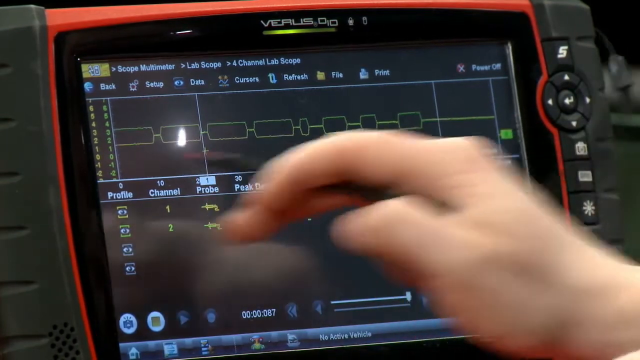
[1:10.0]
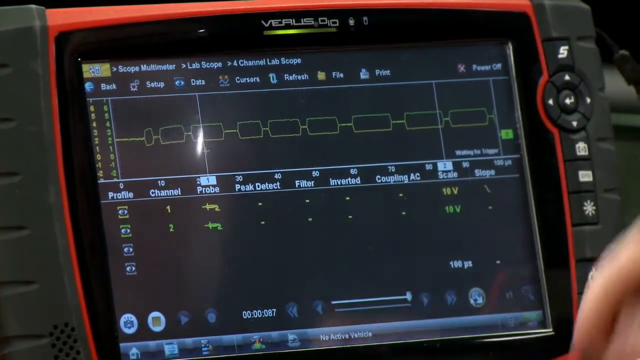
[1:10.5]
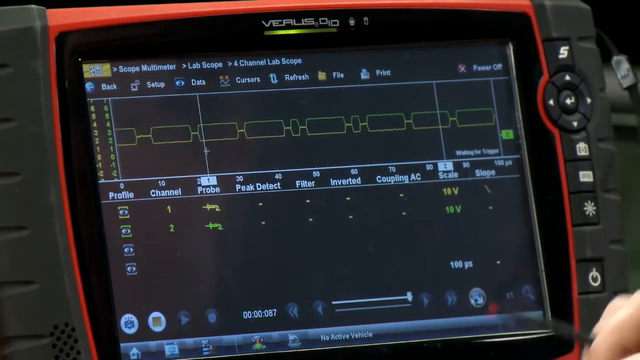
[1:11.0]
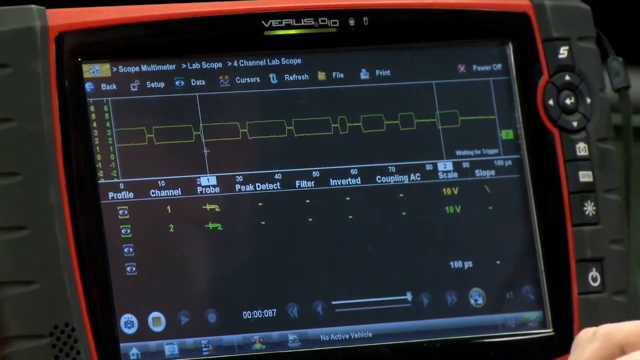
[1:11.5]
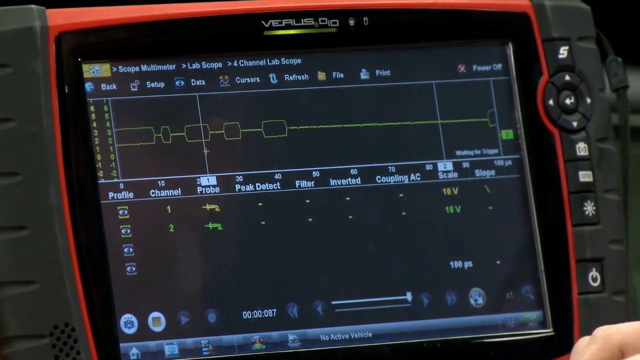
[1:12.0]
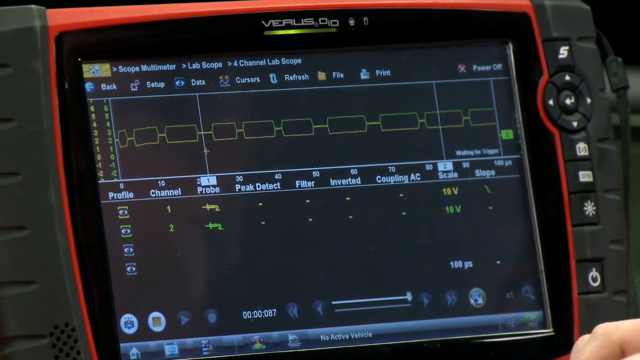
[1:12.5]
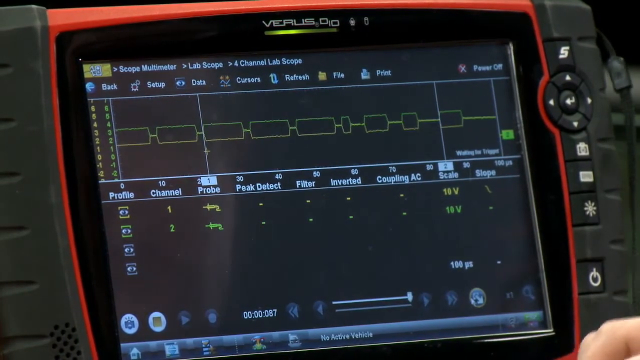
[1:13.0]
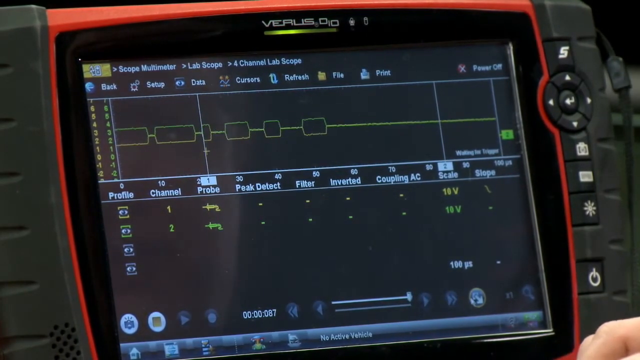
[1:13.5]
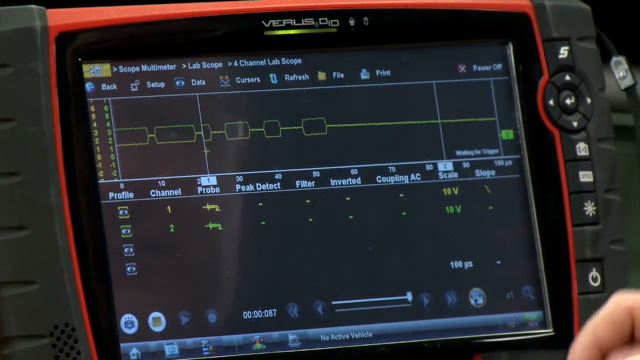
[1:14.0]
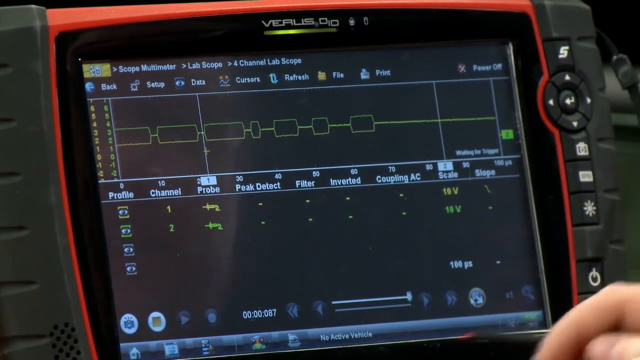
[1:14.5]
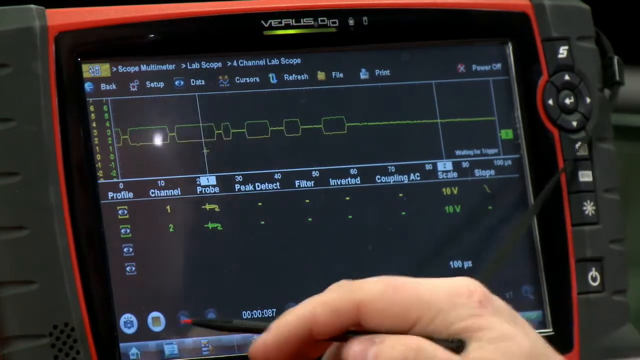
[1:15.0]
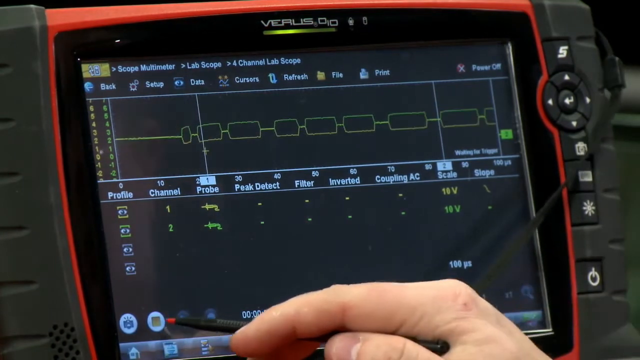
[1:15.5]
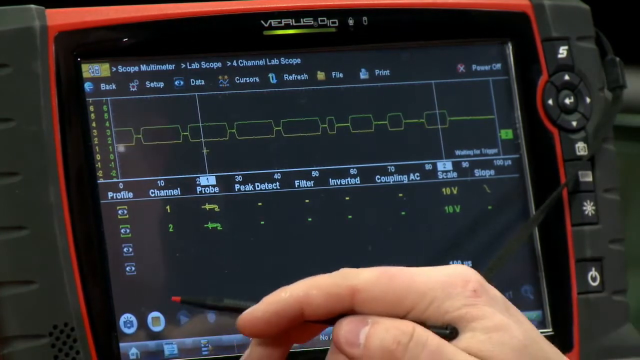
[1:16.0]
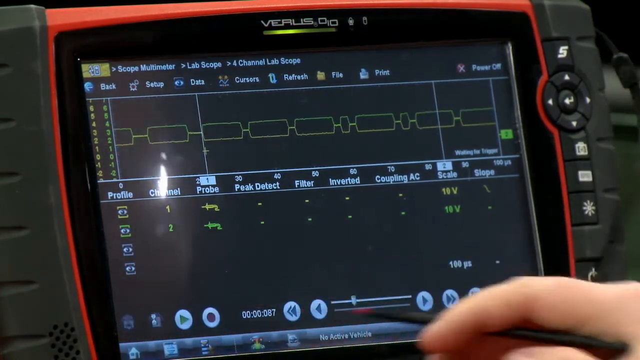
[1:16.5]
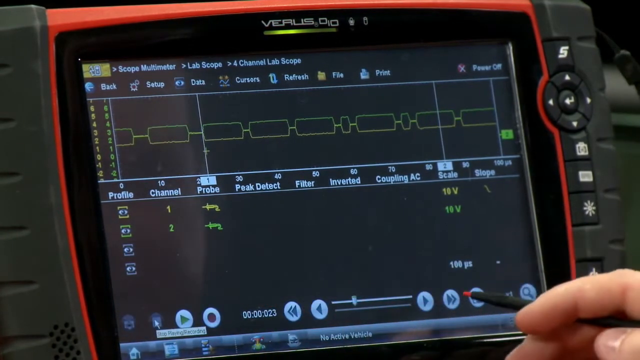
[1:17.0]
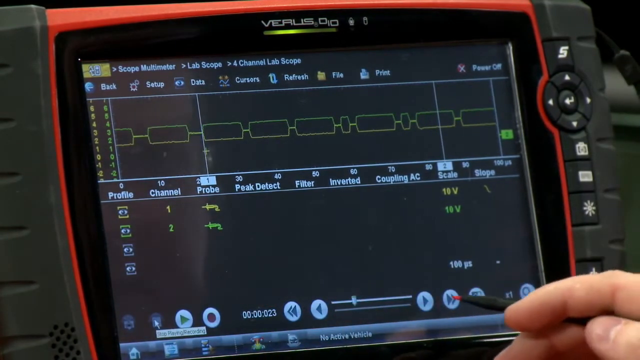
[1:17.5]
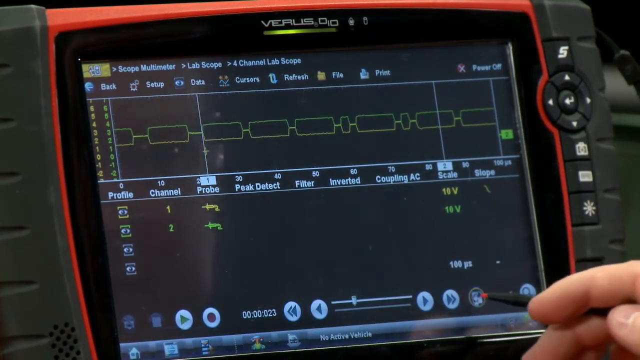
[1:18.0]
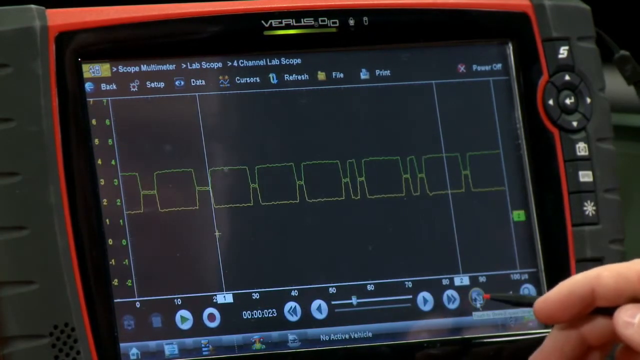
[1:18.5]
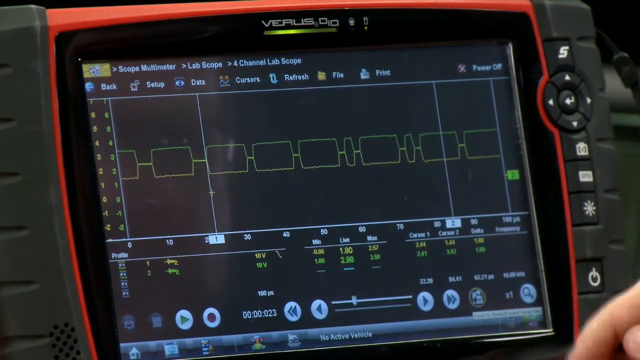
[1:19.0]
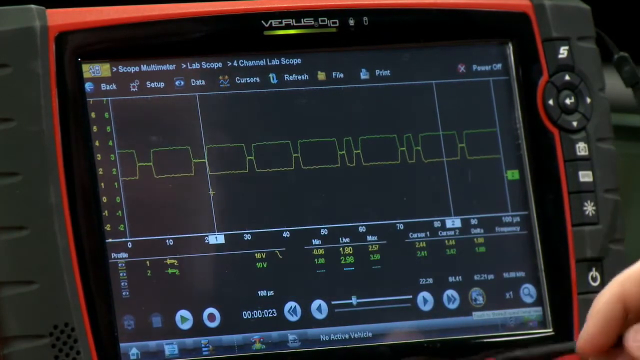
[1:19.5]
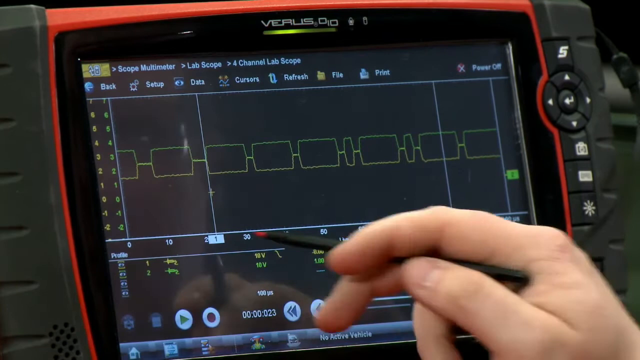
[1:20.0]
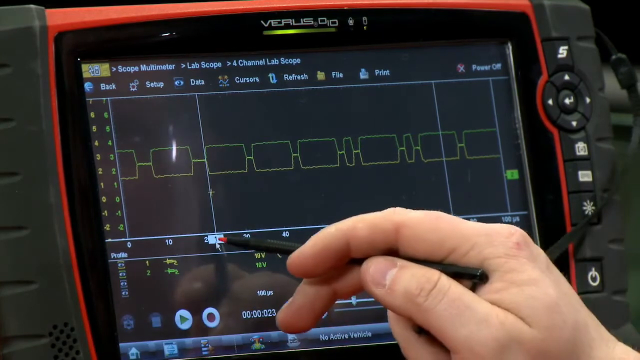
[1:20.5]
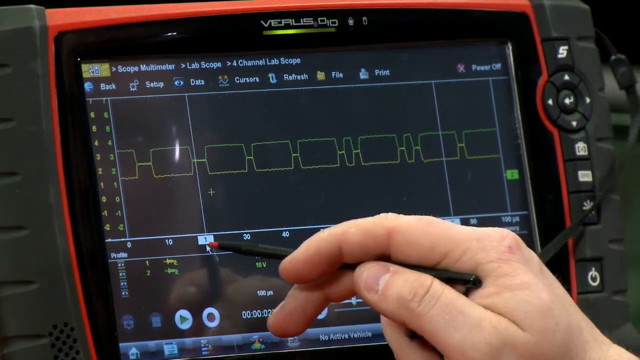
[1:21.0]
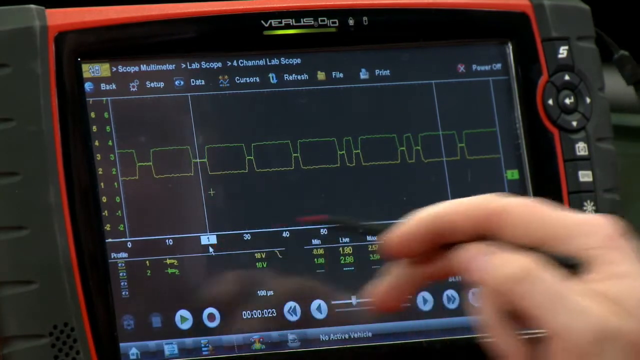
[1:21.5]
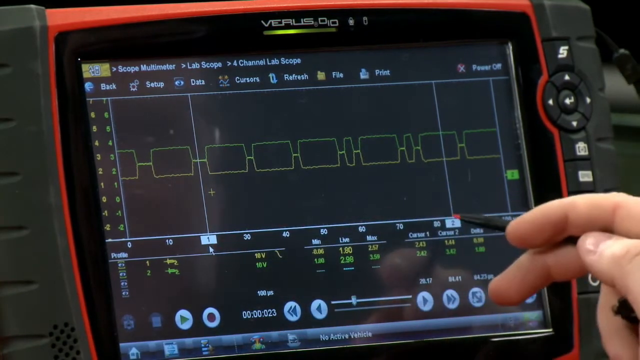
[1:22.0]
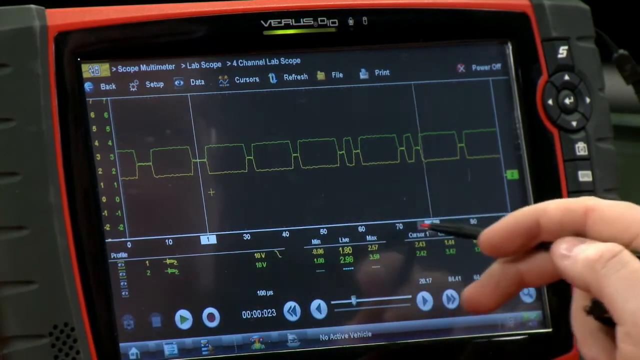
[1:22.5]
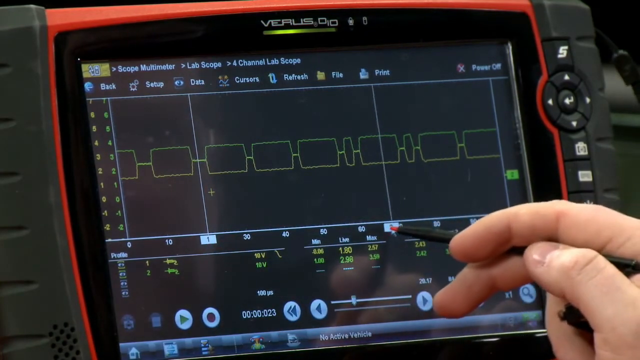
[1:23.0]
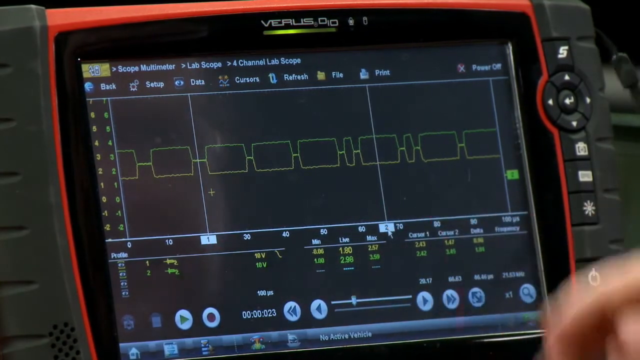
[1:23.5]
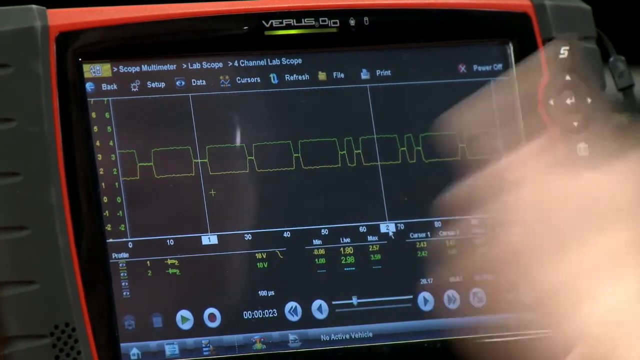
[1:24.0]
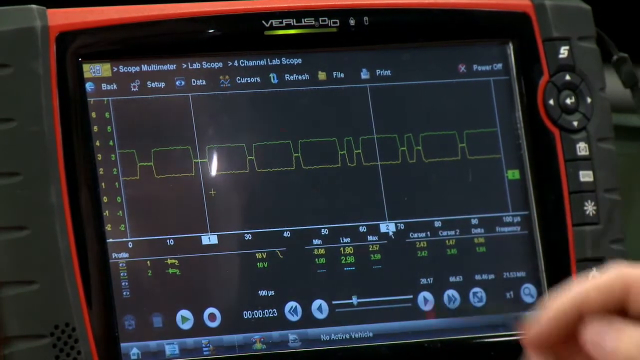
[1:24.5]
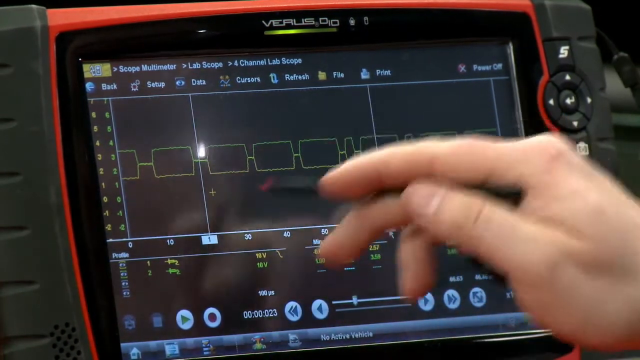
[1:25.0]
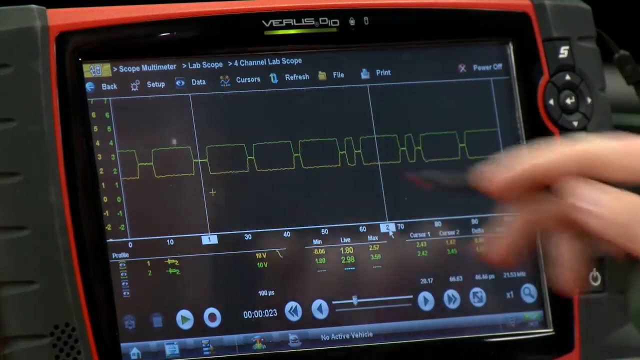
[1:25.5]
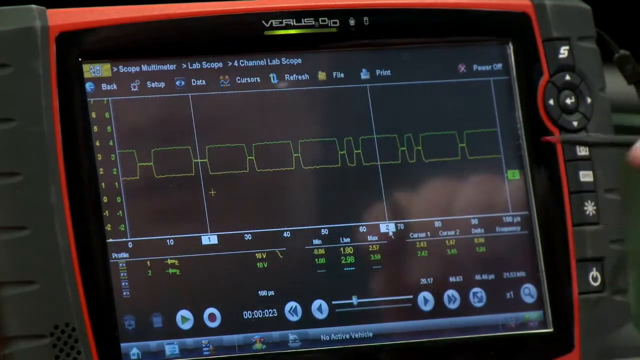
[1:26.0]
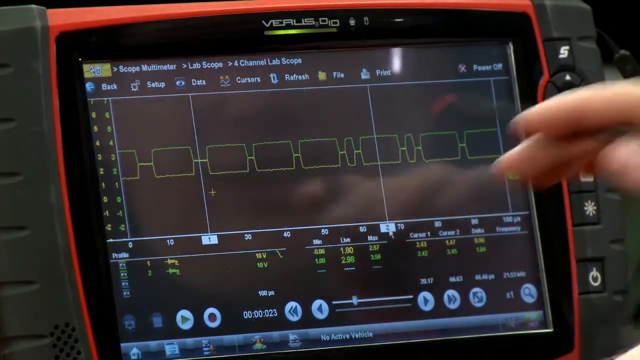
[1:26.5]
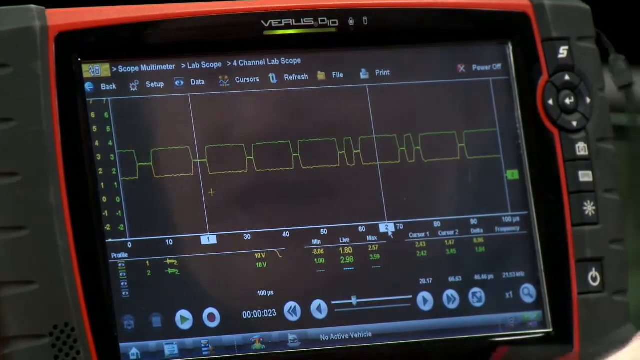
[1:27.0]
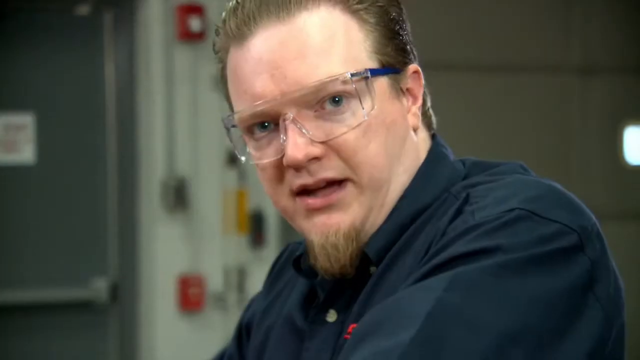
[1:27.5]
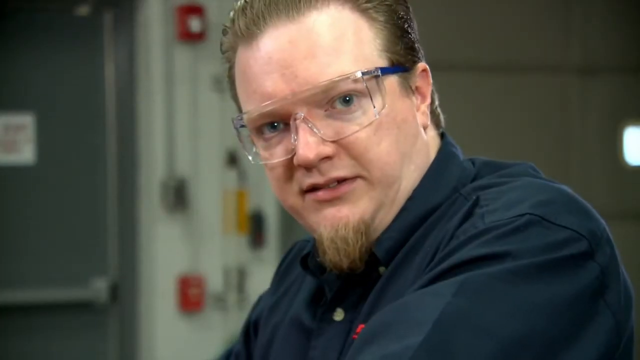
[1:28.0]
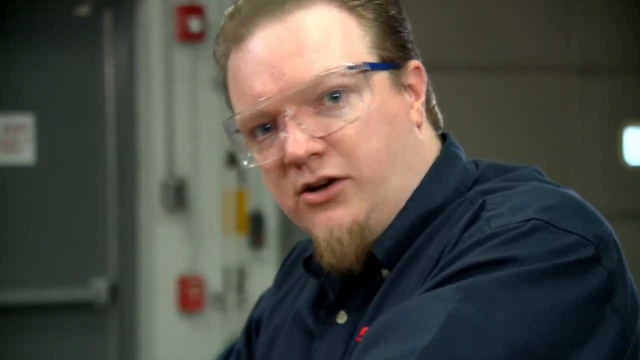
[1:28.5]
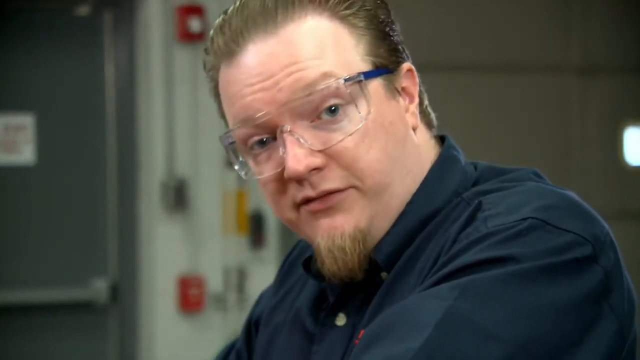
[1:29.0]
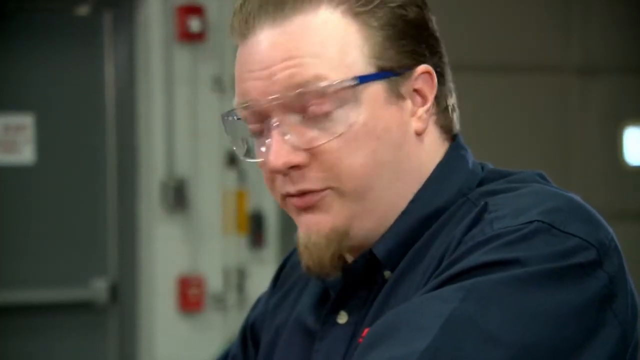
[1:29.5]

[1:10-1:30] Jason, the field trainer, continues to use the stylus pen on the Versus display, which shows a lab scope, a four-channel lab scope. Menu options include "back" and "setup," with subheadings "data," "cursors," "refresh," "file" and "print," and "Power Off" in the upper right corner. Other items on the display are "profile," "channel," "probe," "peak detect," "filter," "inverted" and "scale." At one point he moves lines that are near numbers, near the rectangular shapes moving from right to left. The video then cuts to Jason looking directly into the camera, wearing his goggles; he has brownish blonde hair and a beard.